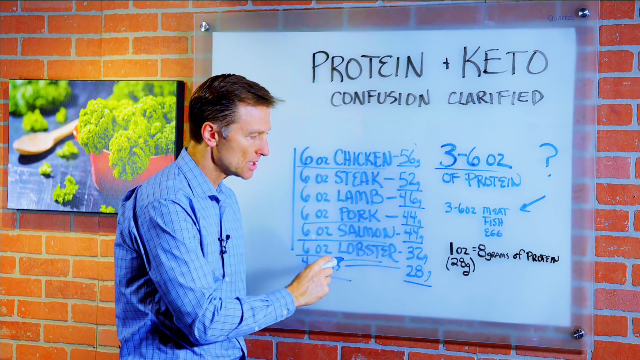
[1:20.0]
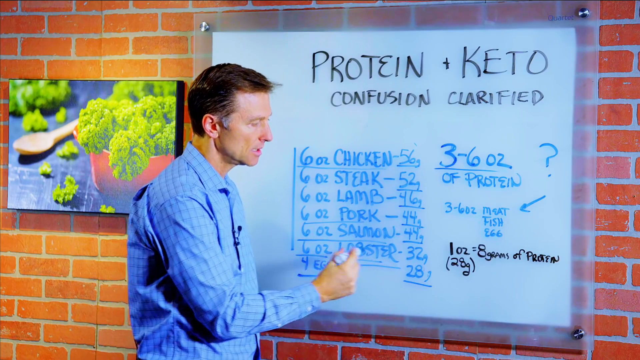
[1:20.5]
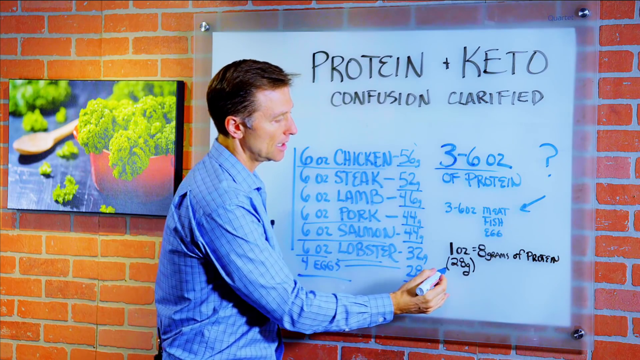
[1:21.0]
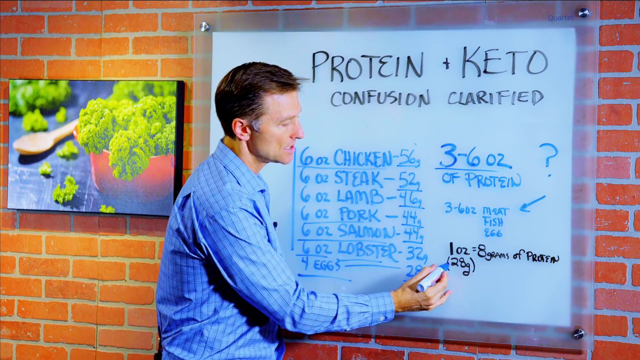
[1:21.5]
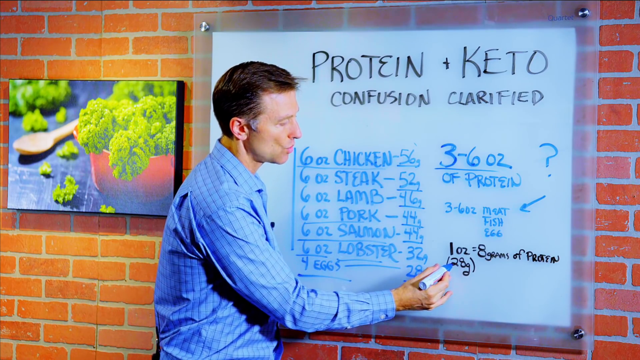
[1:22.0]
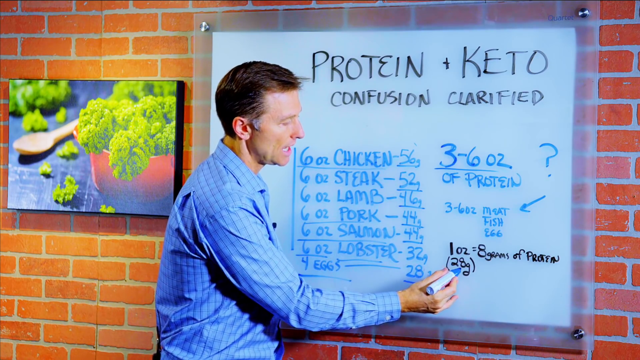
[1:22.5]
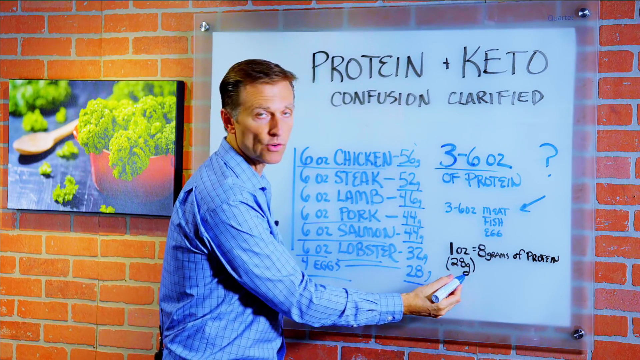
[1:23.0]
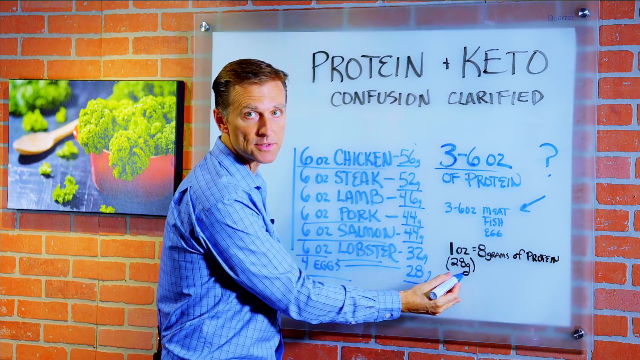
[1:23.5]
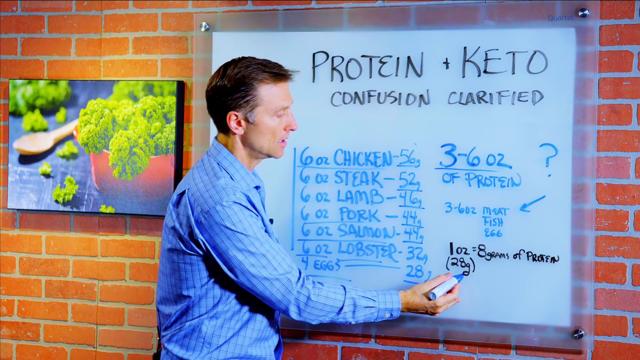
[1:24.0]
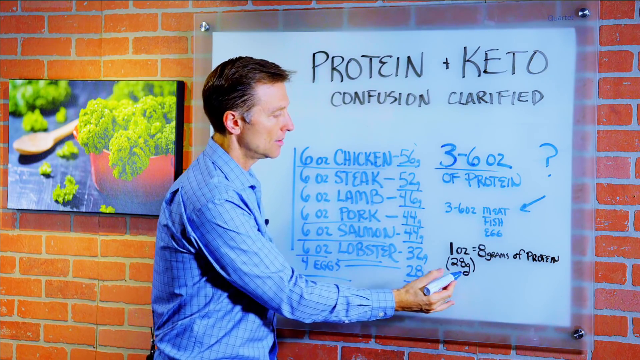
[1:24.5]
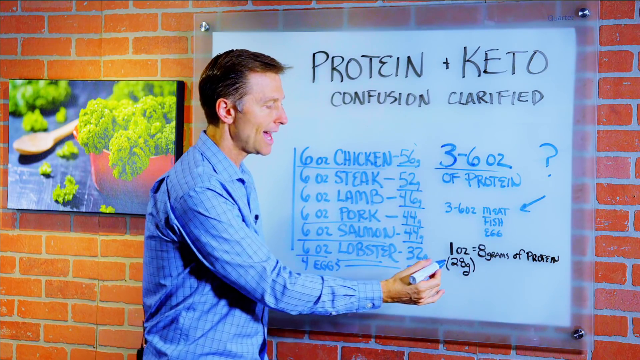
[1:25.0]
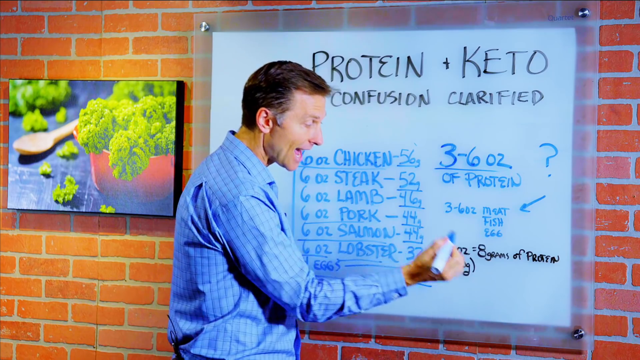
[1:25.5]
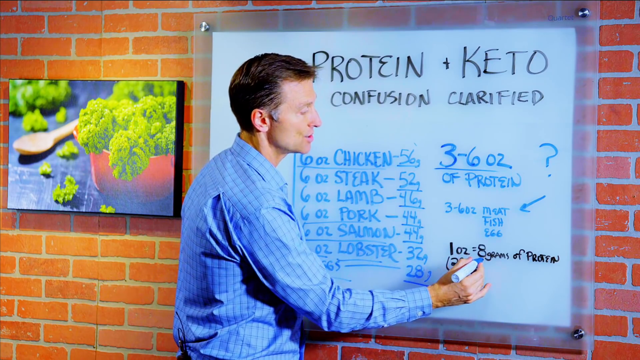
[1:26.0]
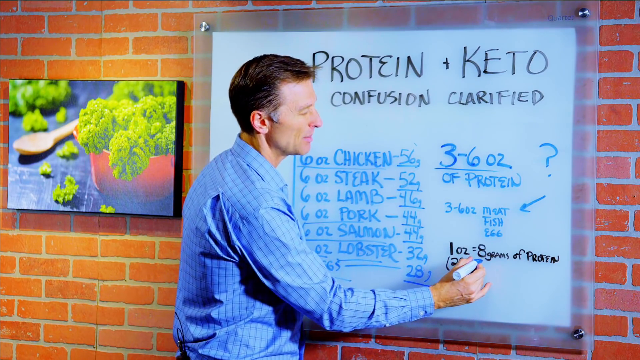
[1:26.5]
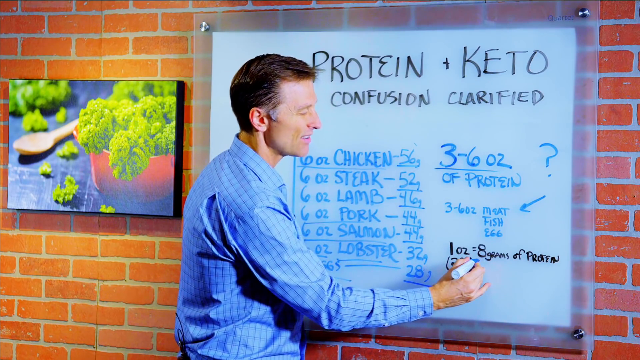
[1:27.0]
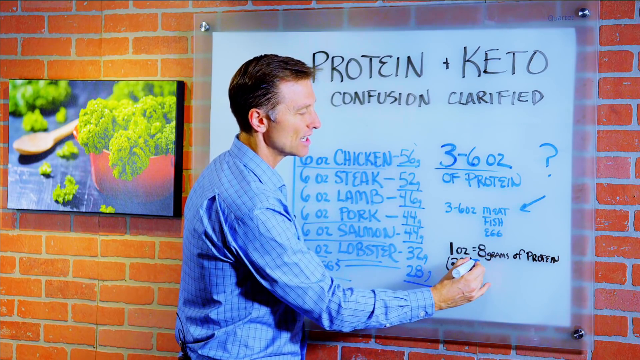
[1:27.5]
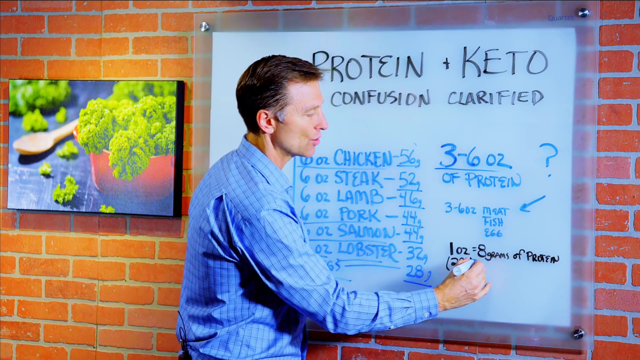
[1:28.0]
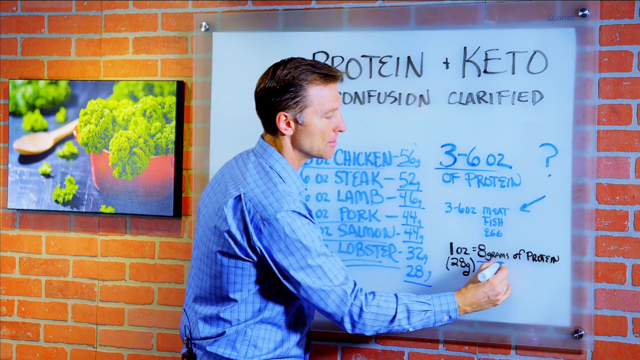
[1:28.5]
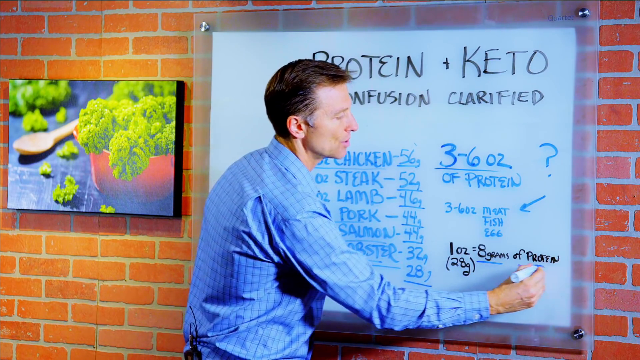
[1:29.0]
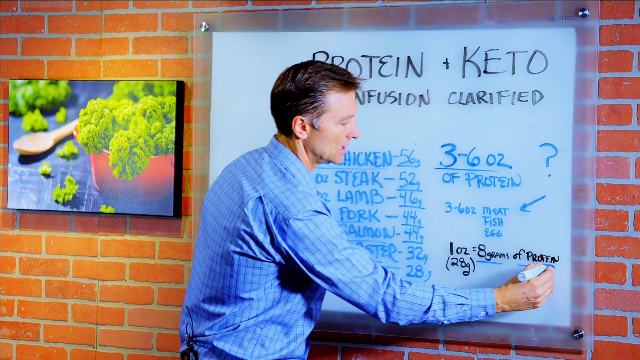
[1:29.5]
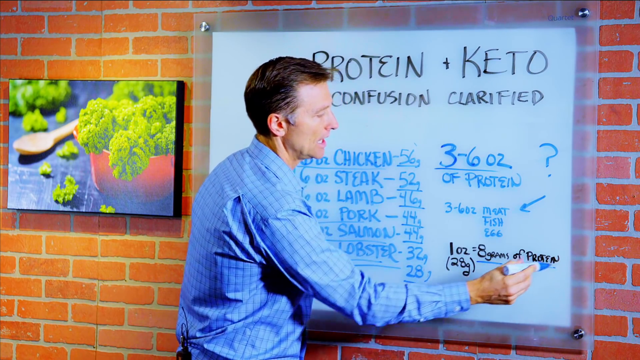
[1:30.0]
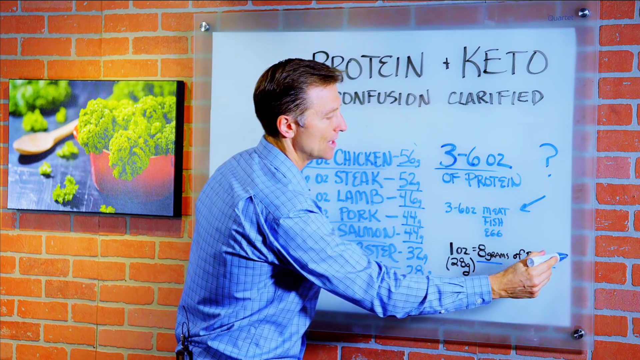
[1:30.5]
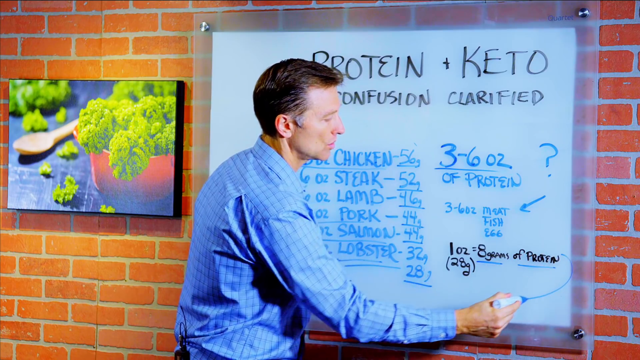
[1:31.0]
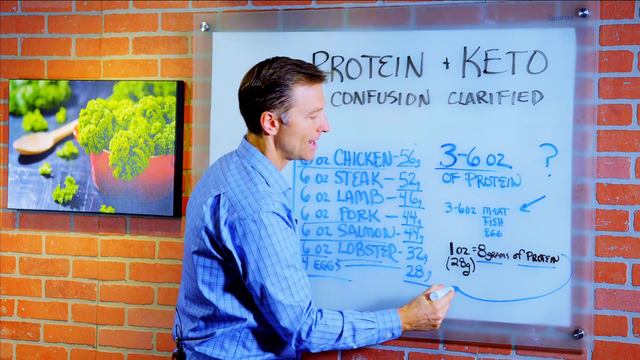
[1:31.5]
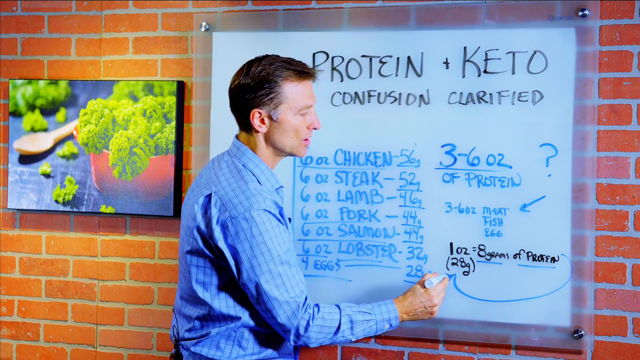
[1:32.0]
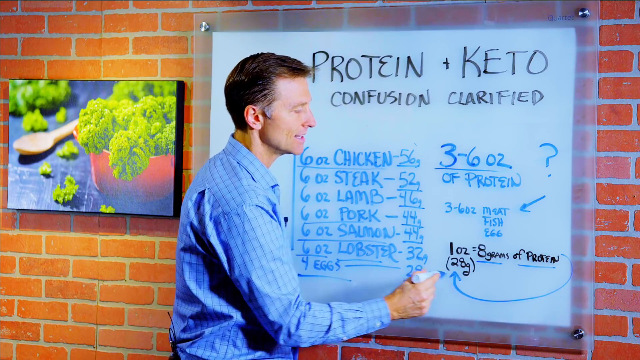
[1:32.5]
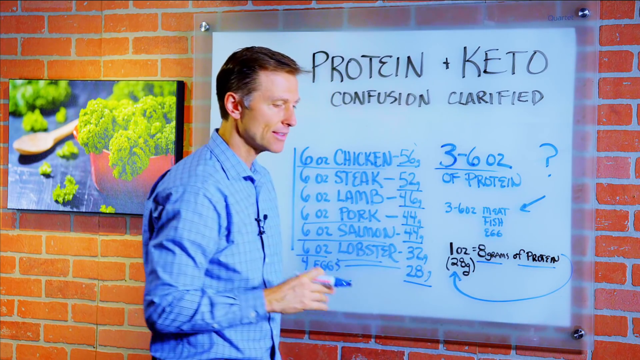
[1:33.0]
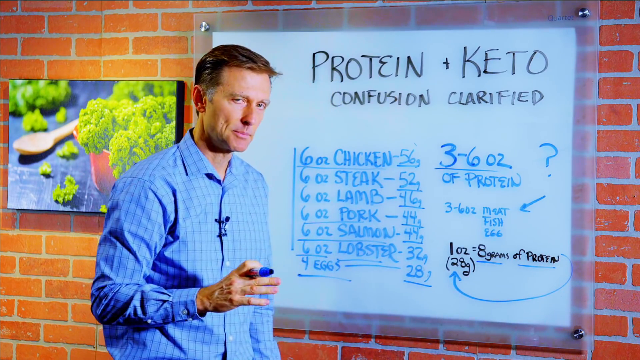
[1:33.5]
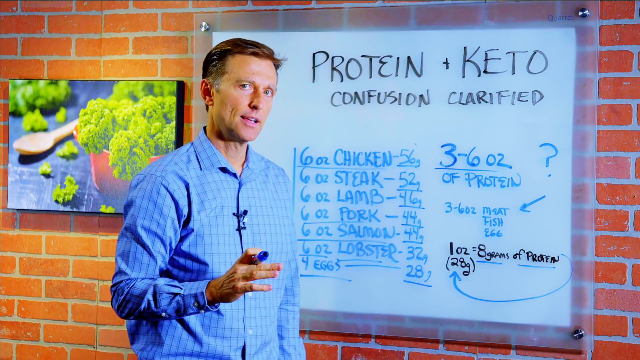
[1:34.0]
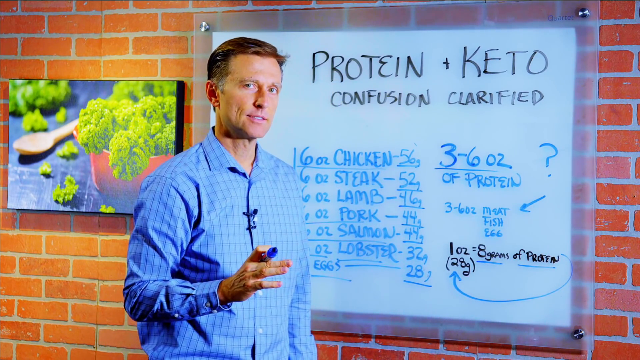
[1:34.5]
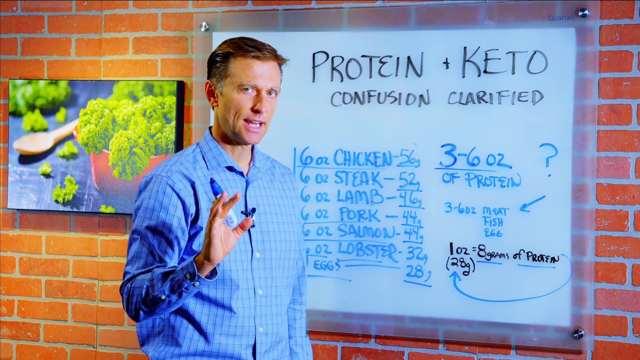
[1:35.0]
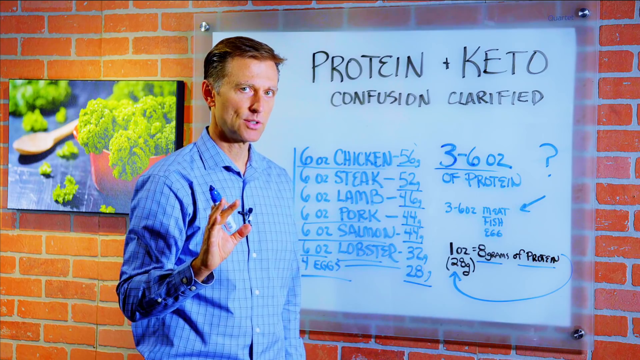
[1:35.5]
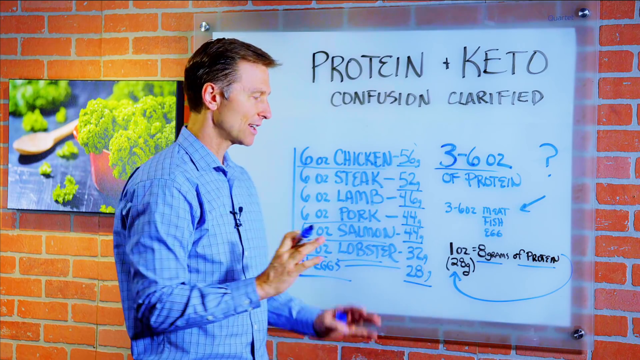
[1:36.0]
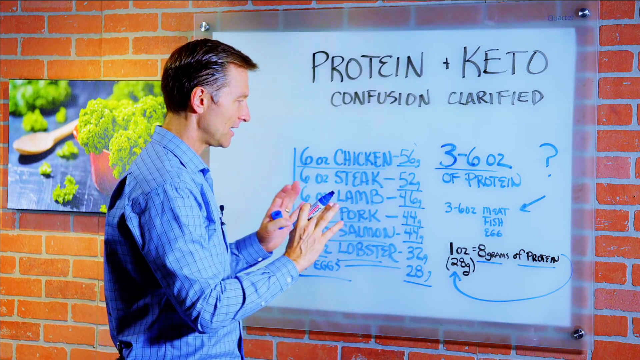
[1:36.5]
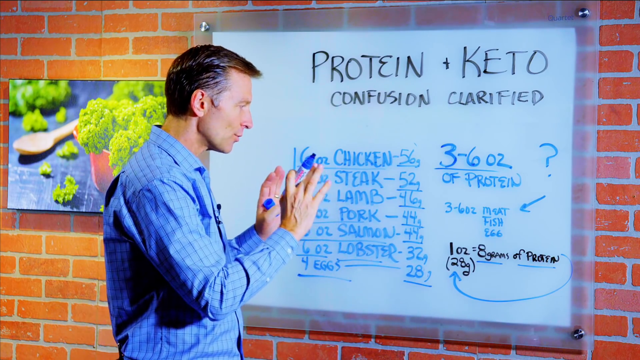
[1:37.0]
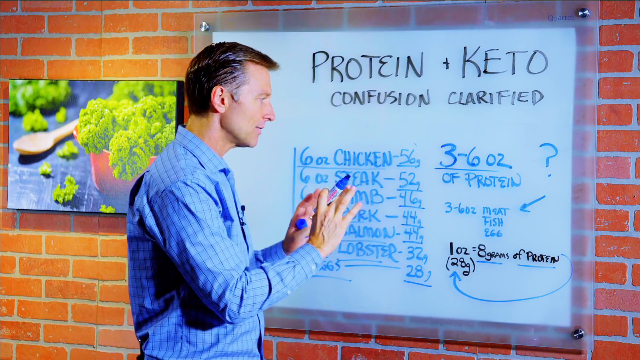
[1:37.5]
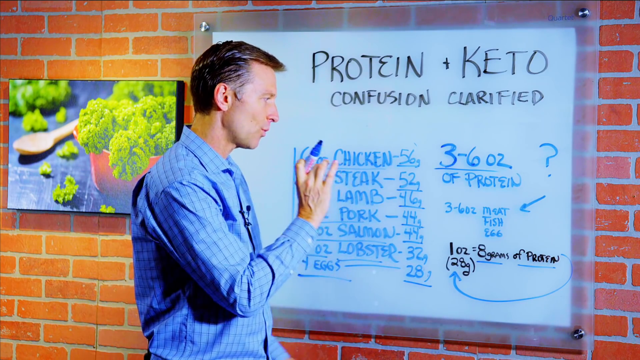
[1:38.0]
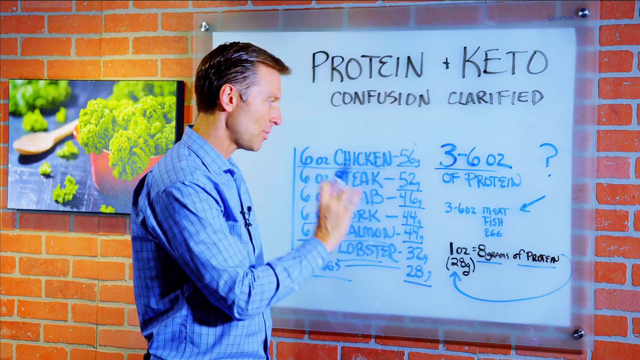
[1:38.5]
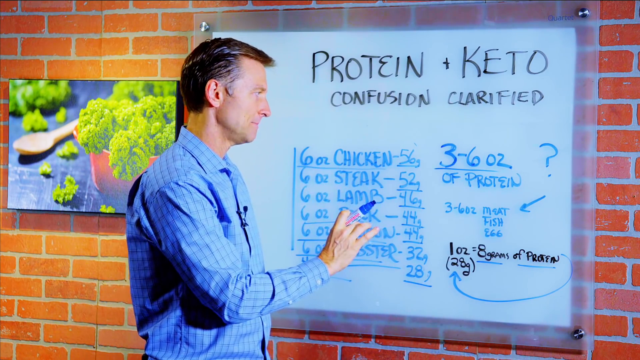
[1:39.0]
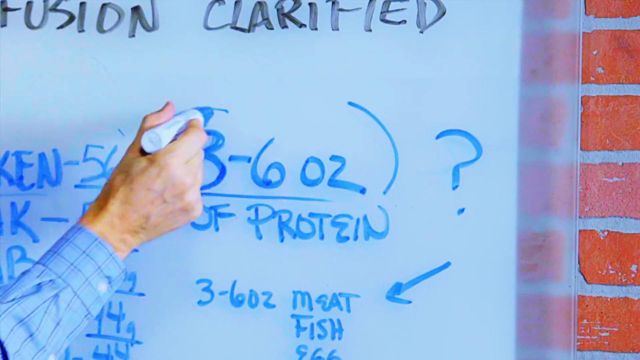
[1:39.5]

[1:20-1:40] The man continues explaining the points on the board, turning between the board and the camera as he makes each one. He underlines individual words as he explains them and draws lines of comparison between two different things in his lists. He refreshes the number 3 and underlines "28 grams" again. He then underlines "8 grams of protein" in black text and draws a blue arrow toward "28 grams". He turns back to the camera to explain with his hands, then underlines the word "lobster" again. He points to the board as he keeps turning between the whiteboard and the camera to explain the multiple examples of protein he has listed, emphasizing certain points with his hands. He turns back with the marker, finishes drawing, and gestures with his hands the size of the amount of protein he is using as an example.